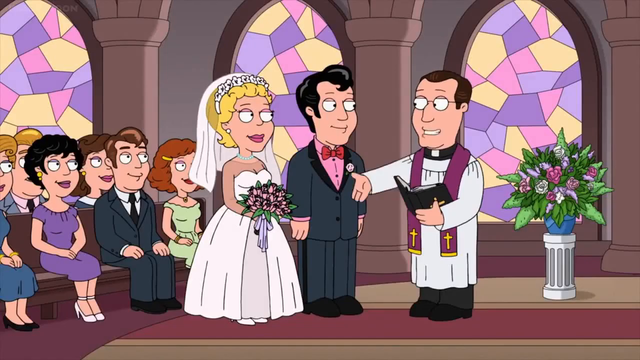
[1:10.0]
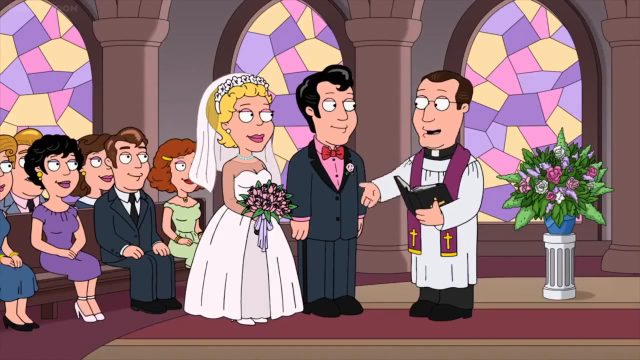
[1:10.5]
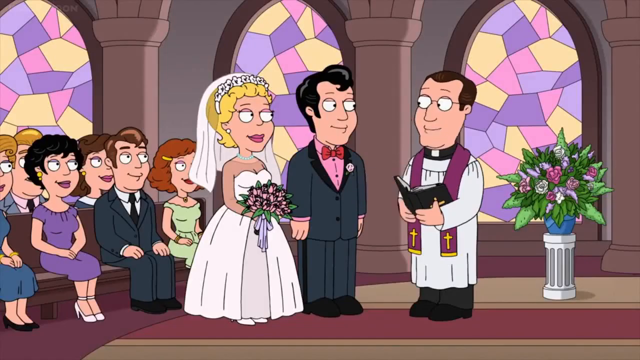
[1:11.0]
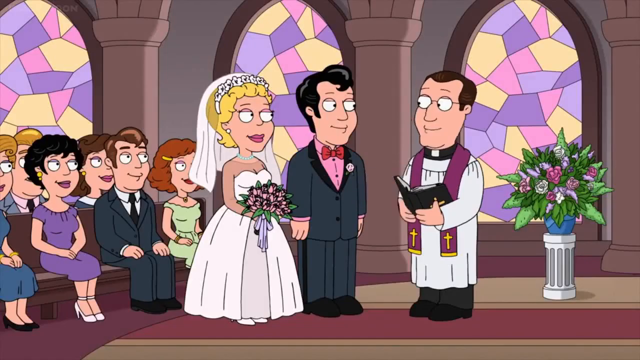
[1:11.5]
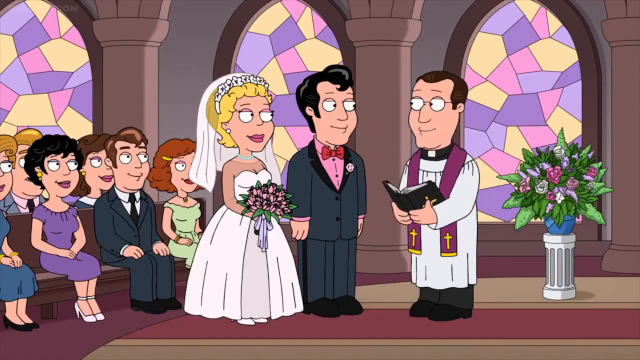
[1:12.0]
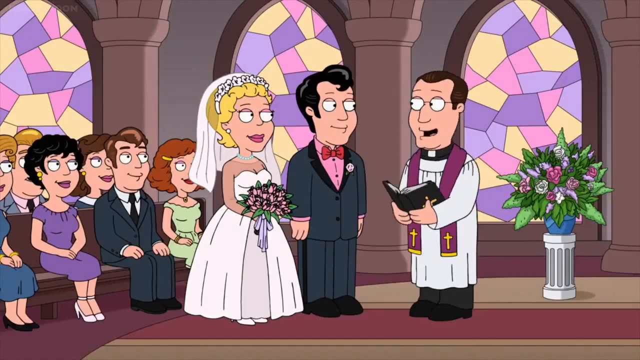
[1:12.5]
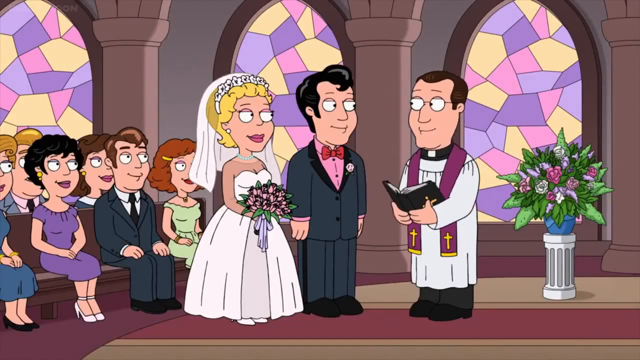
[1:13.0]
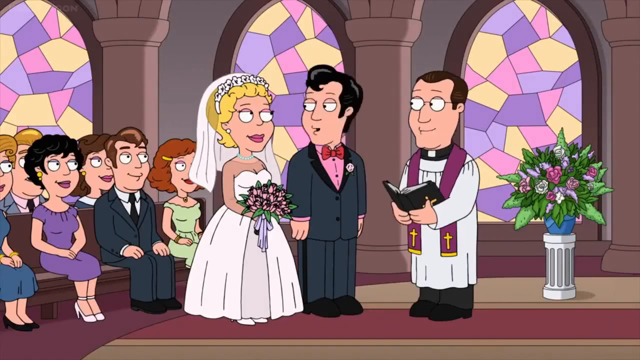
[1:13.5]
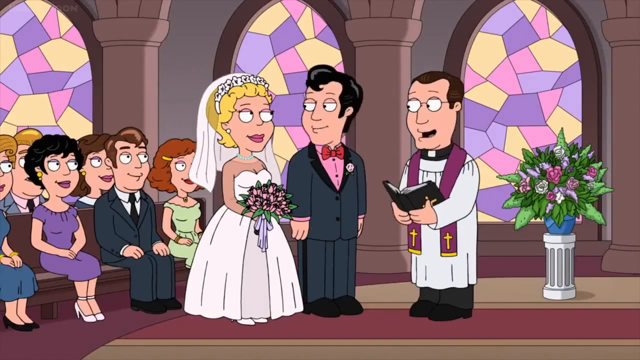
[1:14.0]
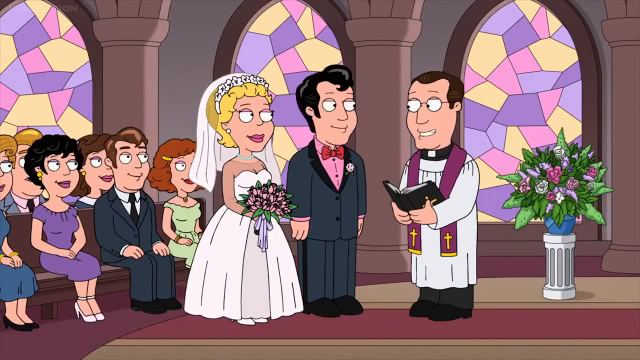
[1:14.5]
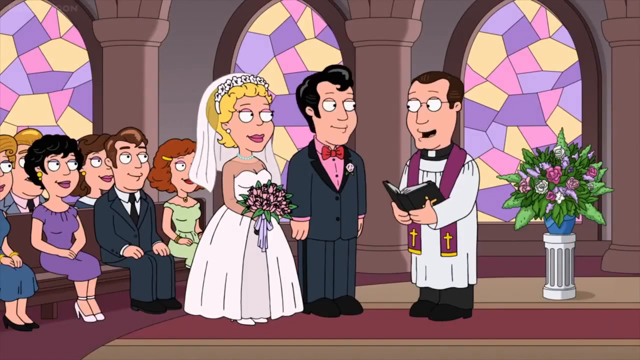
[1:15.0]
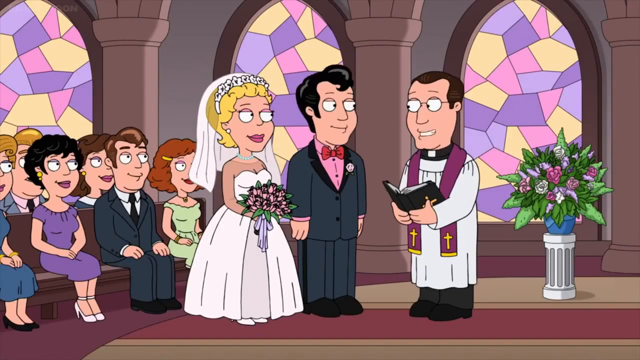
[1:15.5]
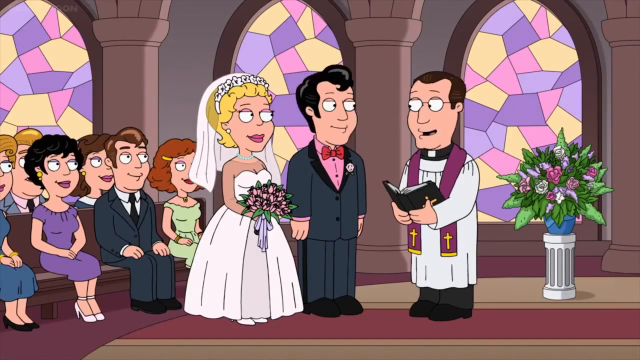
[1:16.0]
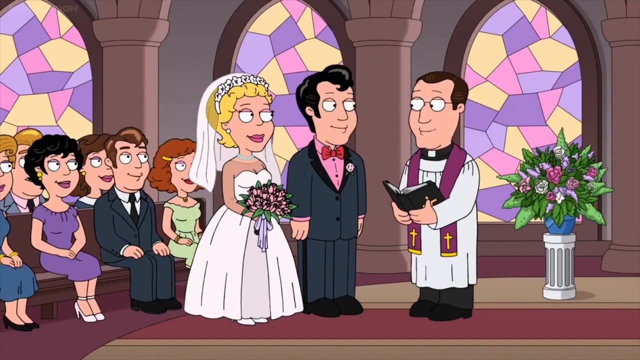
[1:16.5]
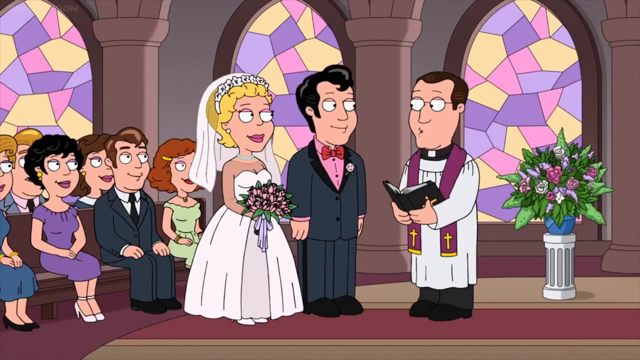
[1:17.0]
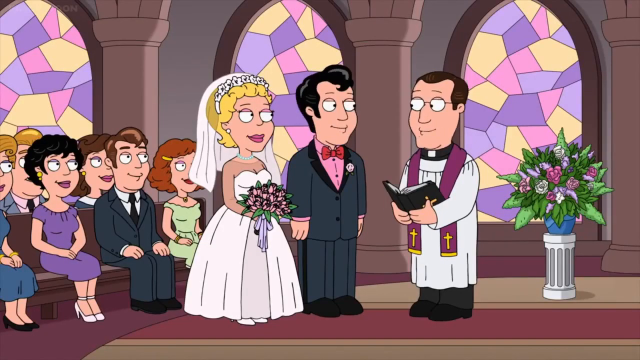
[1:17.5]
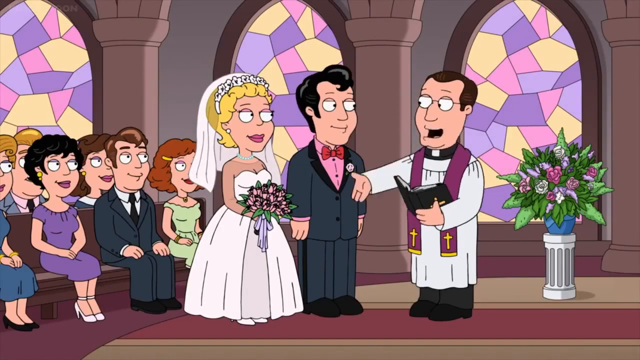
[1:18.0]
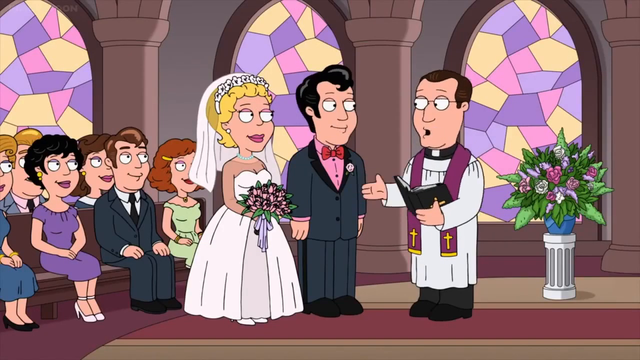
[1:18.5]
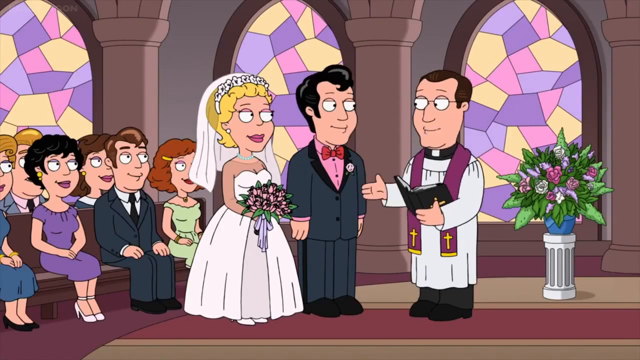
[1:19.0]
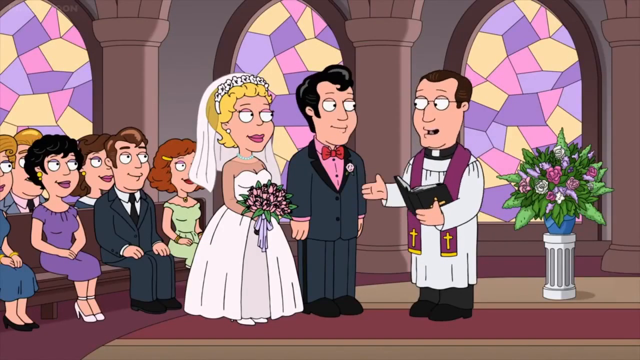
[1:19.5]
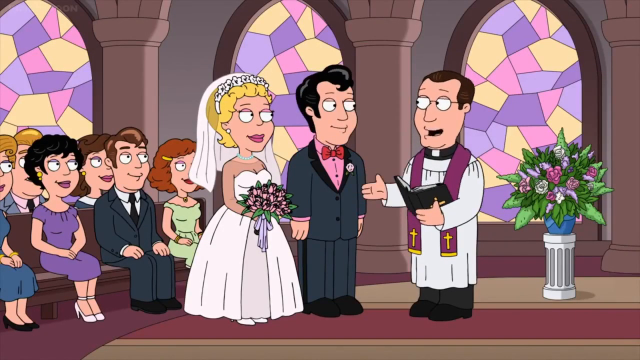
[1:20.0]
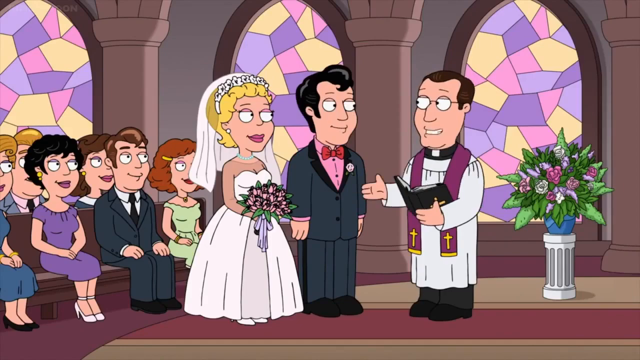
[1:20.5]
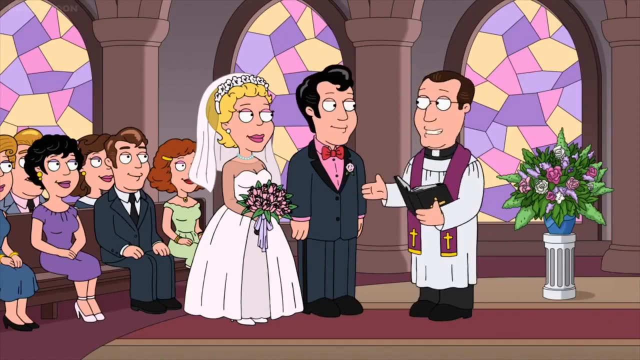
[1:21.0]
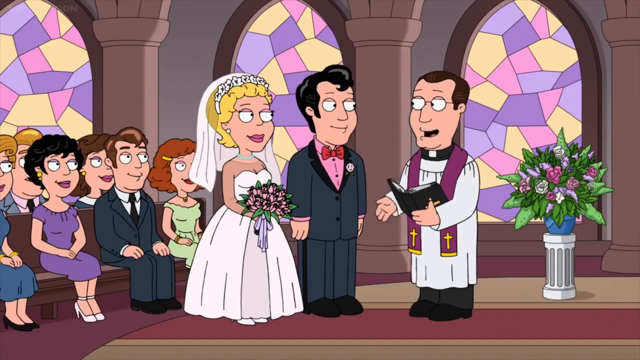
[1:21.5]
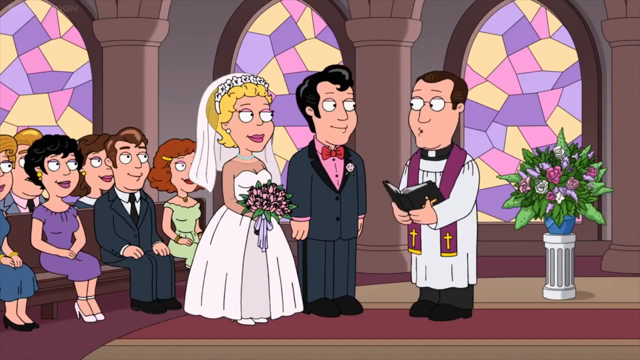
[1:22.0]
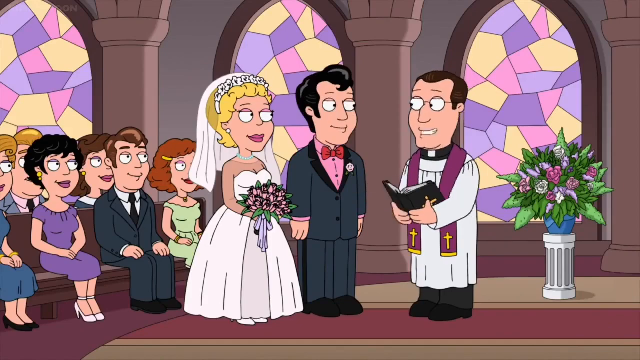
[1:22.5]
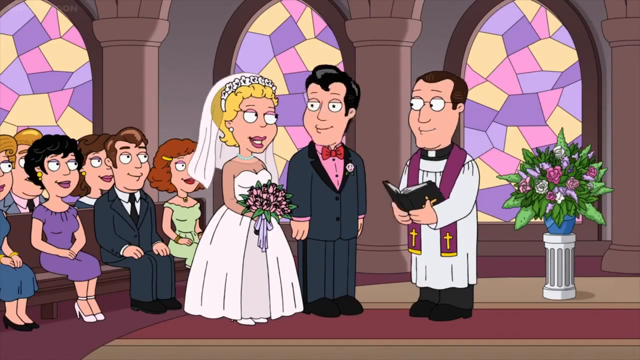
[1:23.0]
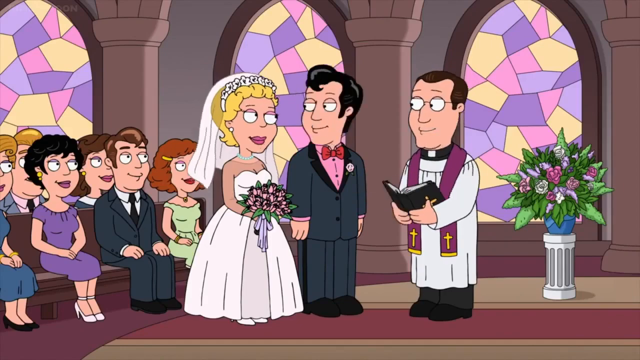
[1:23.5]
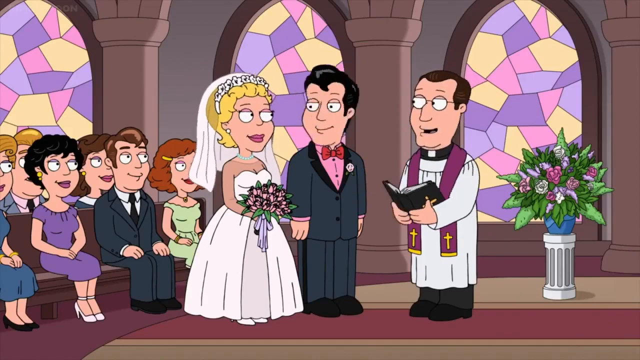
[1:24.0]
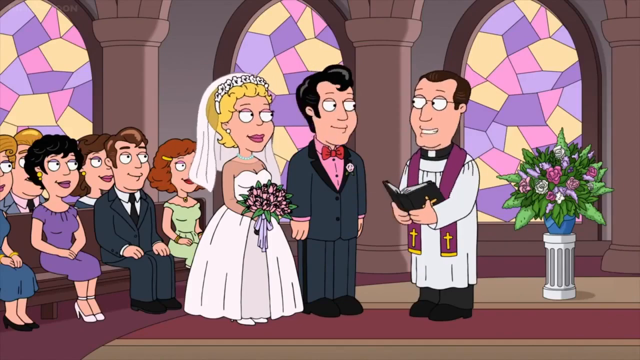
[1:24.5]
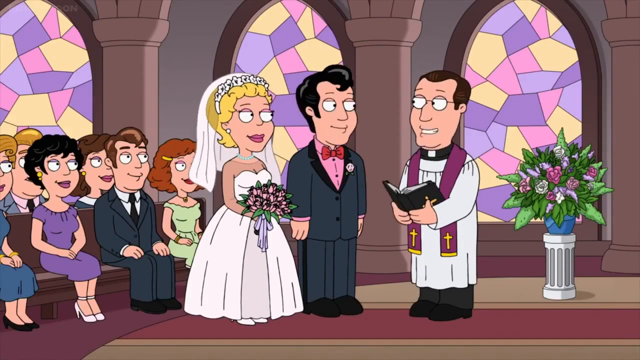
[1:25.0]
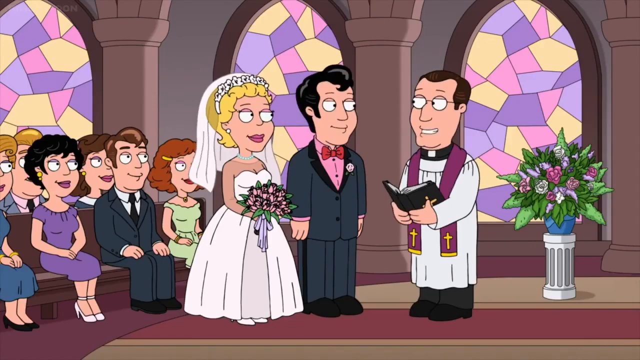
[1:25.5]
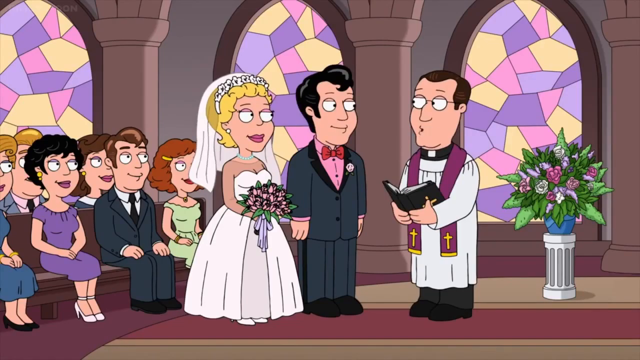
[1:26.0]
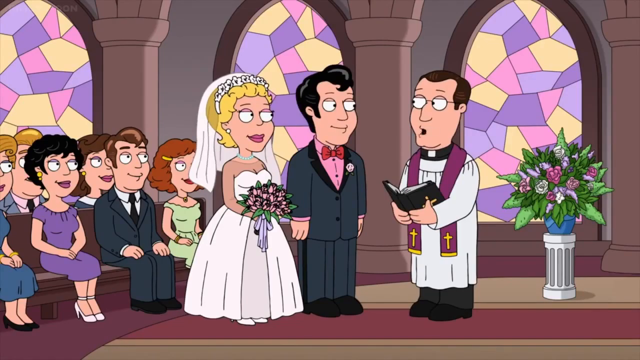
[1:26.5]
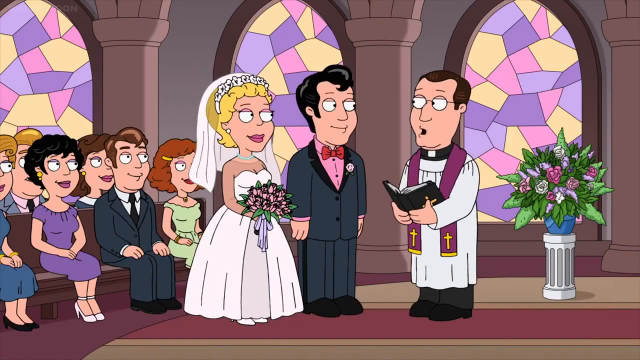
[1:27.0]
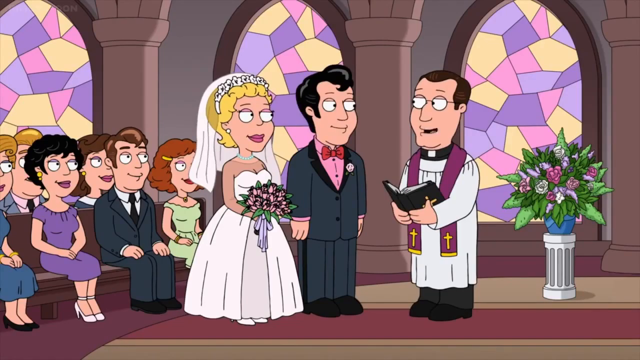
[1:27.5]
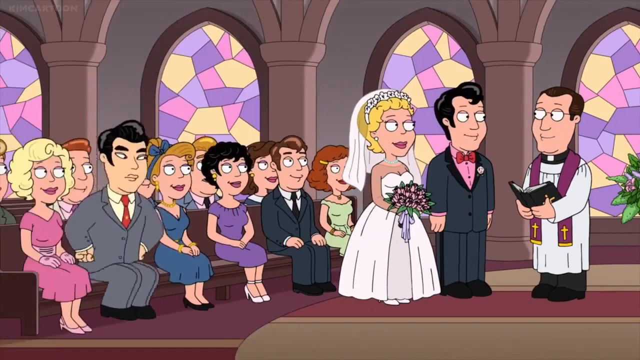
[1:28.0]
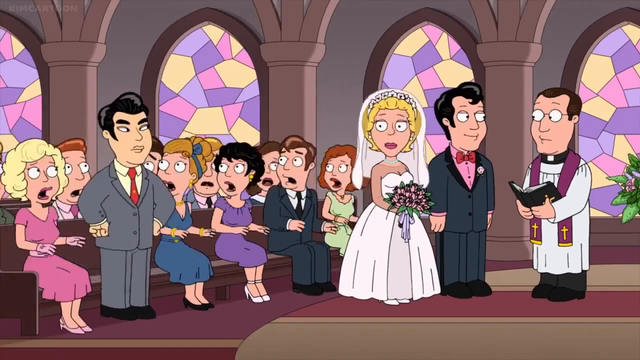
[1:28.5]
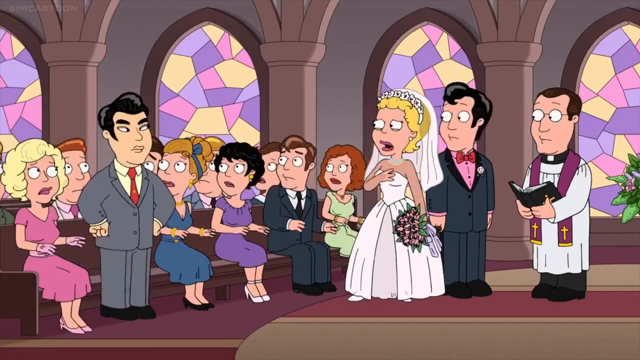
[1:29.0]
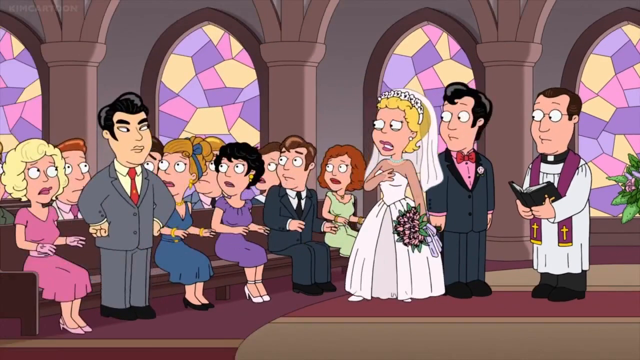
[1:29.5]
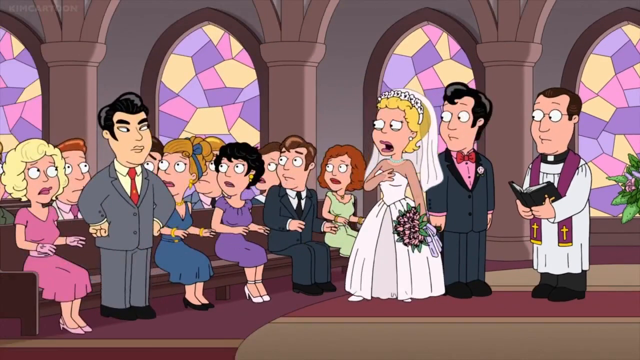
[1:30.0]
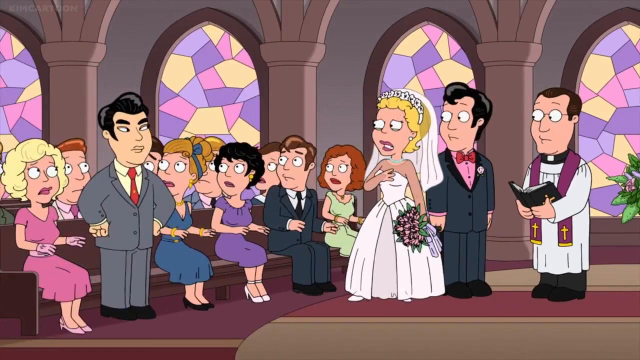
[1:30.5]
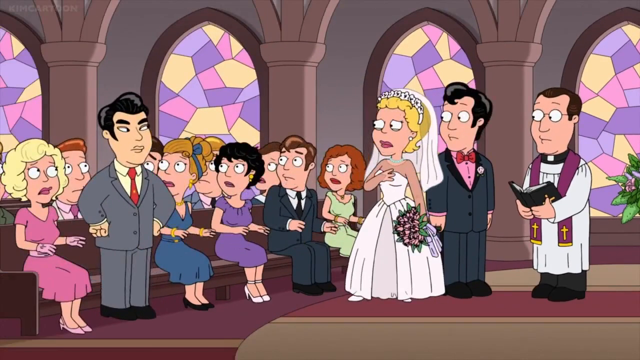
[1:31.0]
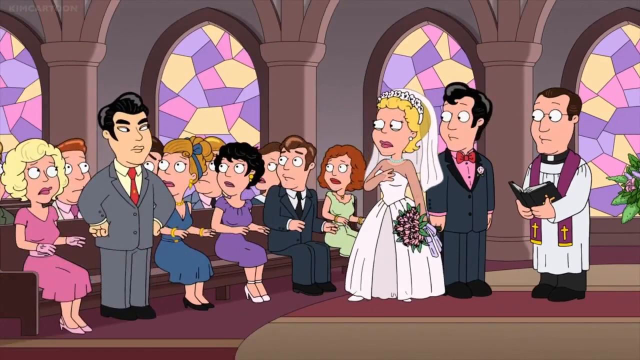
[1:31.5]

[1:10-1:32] In the church, a man and a woman are getting married before a priest. Three stained-glass windows are visible, and about six people are shown watching. The bride wears a strapless white dress with a blue necklace; the groom wears a black suit with a pink shirt and a red bow tie. There are flowers in the church. The priest has his Bible and is reading from it. Someone stands up, apparently objecting to the wedding: the bride looks shocked and a little upset, and everyone in the crowd puts their arms out as if asking what is going on. The bride is clearly not happy.